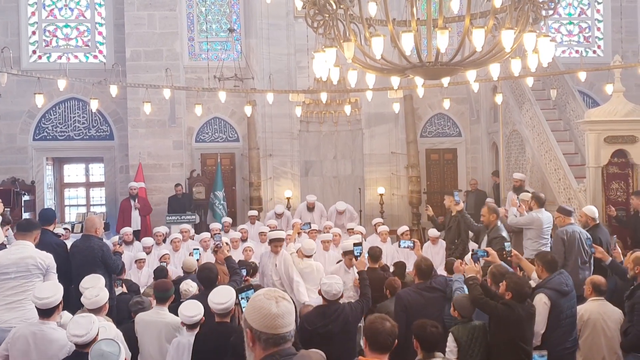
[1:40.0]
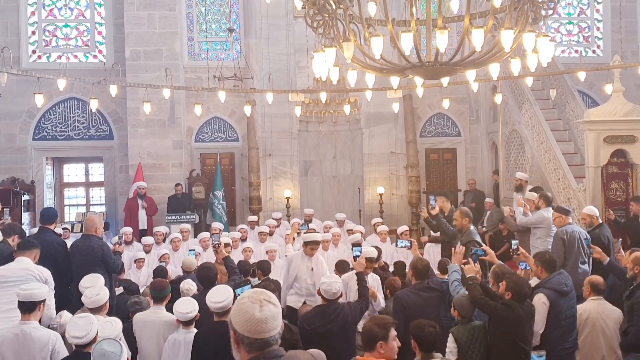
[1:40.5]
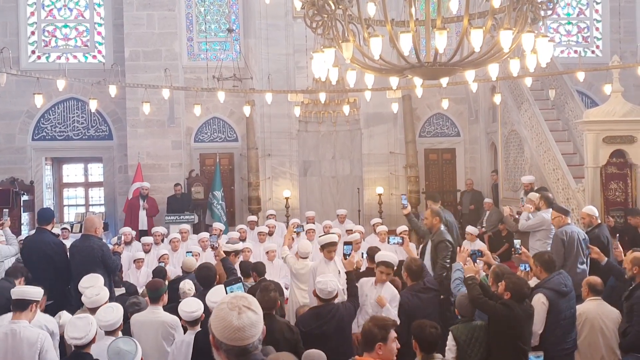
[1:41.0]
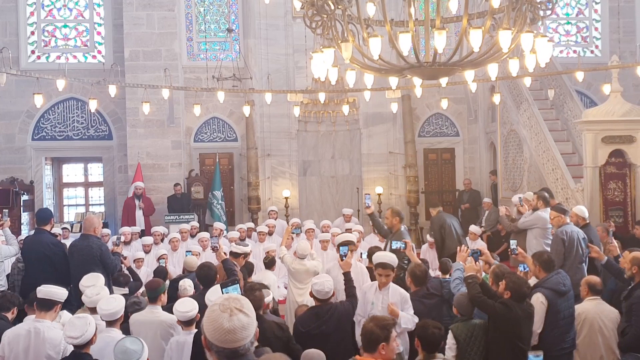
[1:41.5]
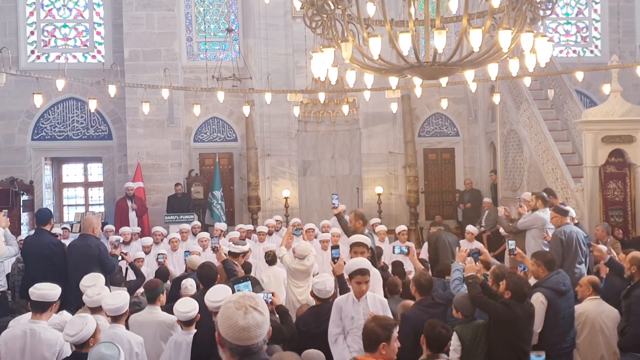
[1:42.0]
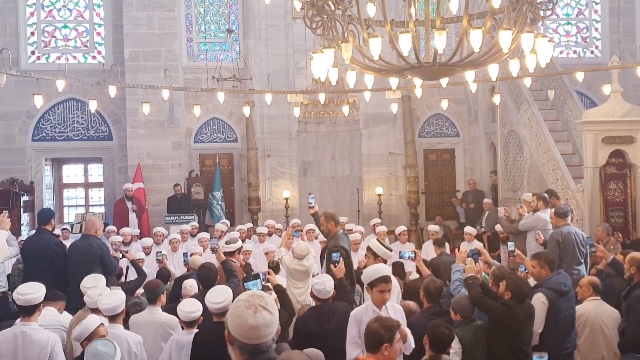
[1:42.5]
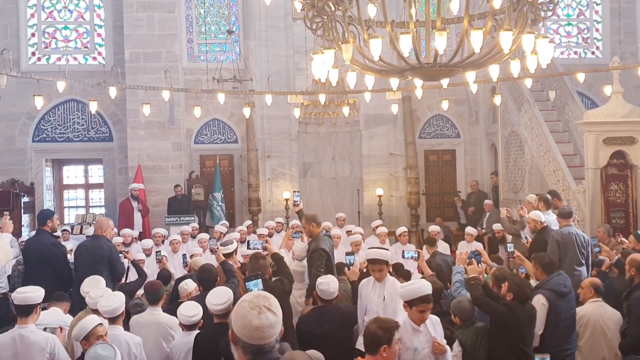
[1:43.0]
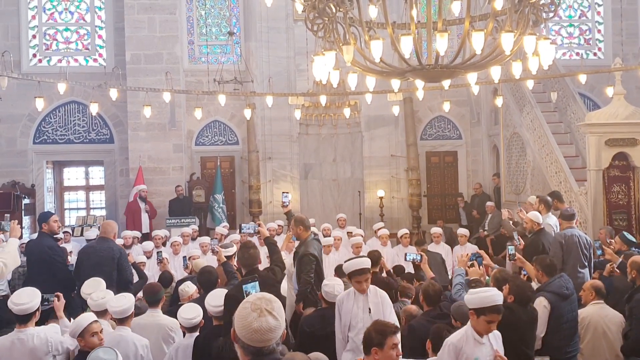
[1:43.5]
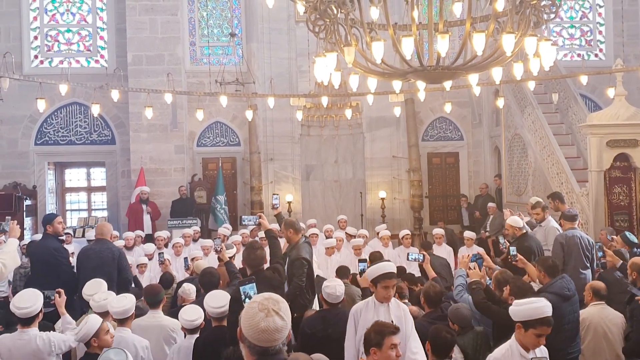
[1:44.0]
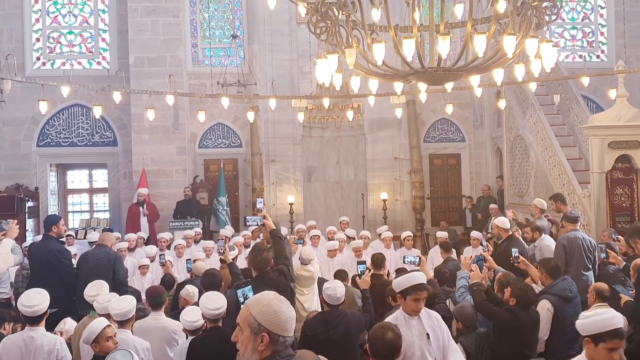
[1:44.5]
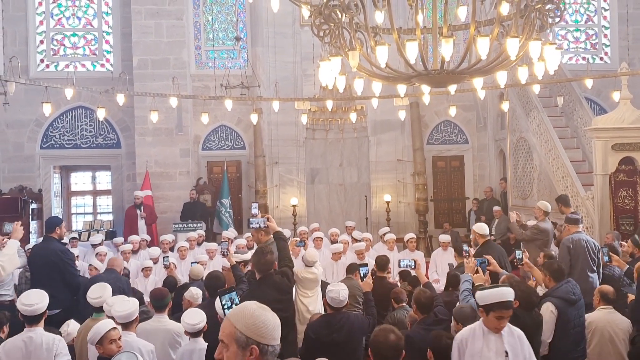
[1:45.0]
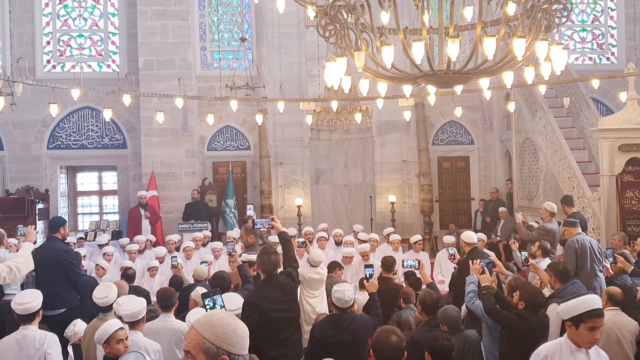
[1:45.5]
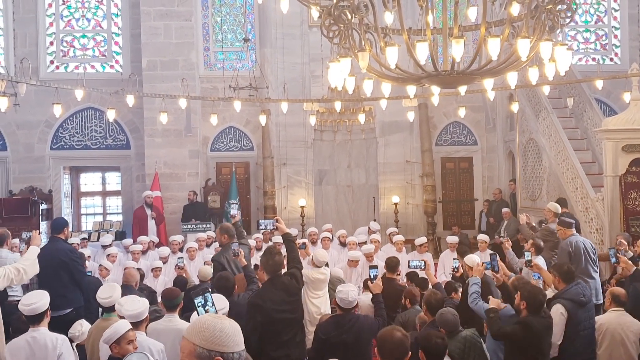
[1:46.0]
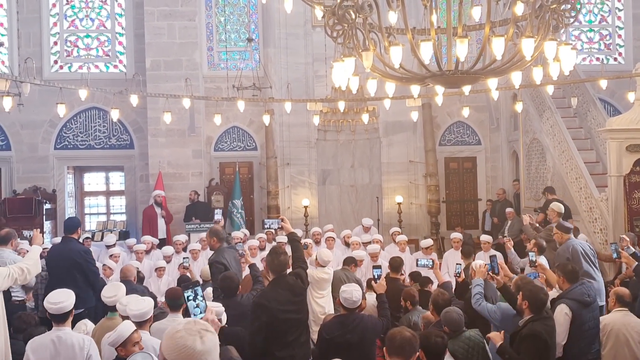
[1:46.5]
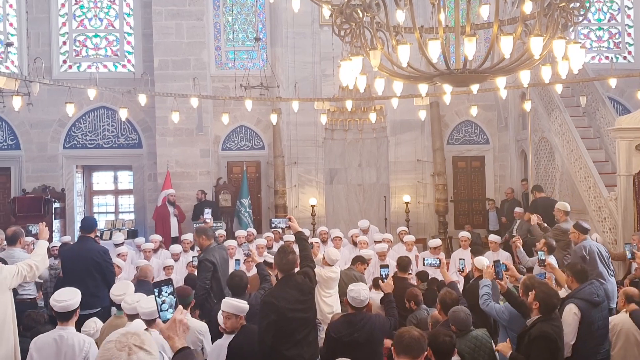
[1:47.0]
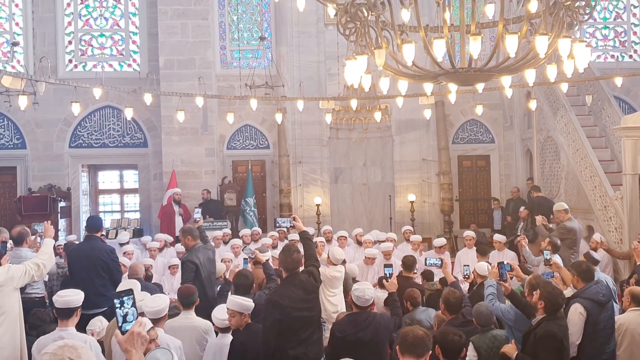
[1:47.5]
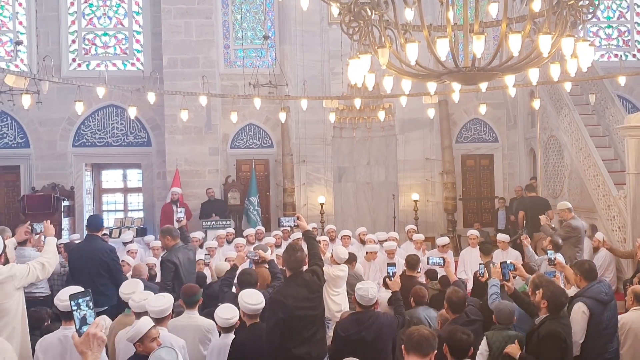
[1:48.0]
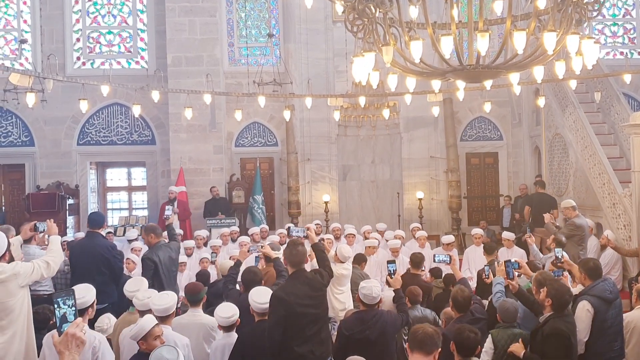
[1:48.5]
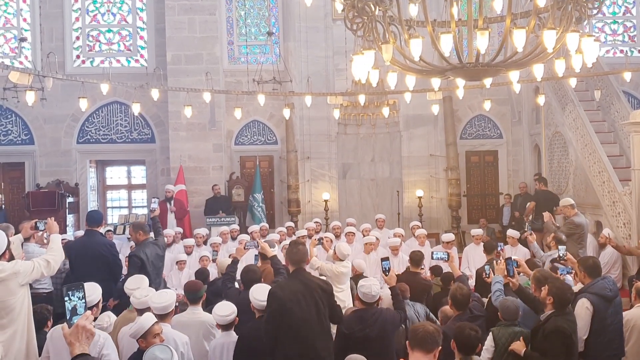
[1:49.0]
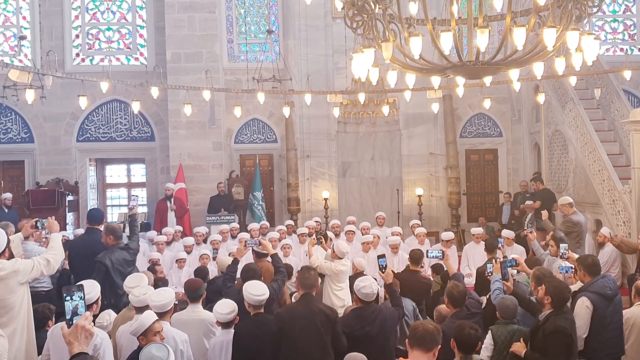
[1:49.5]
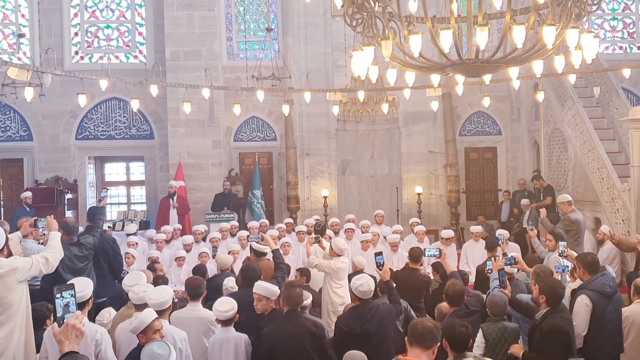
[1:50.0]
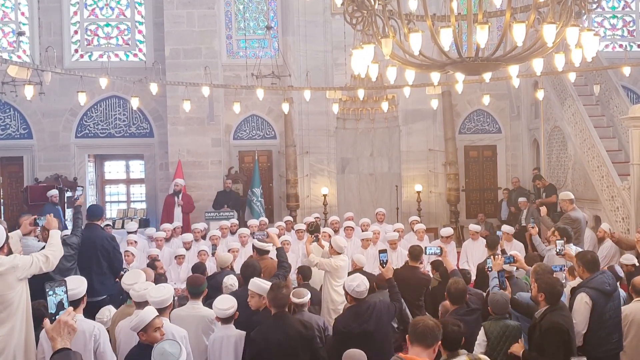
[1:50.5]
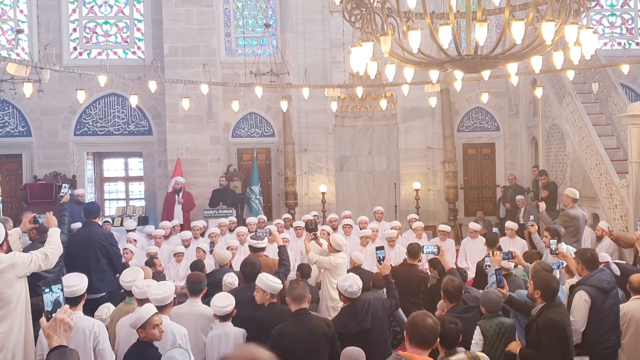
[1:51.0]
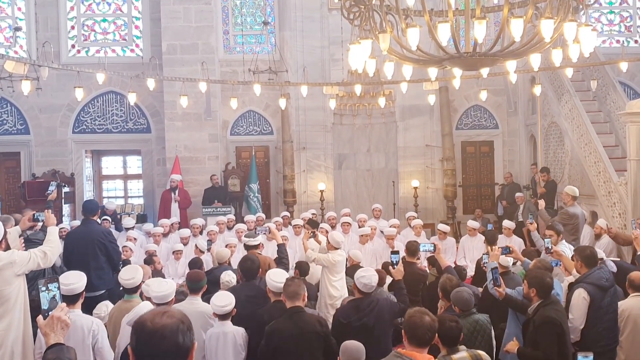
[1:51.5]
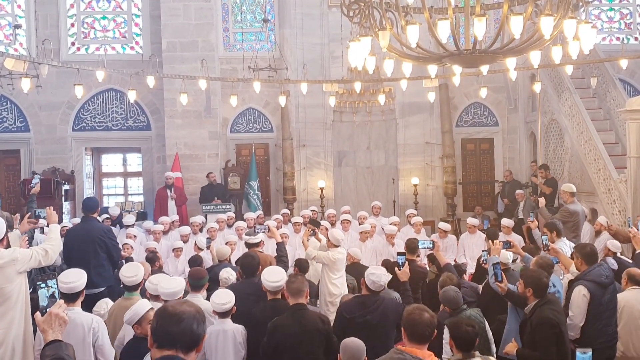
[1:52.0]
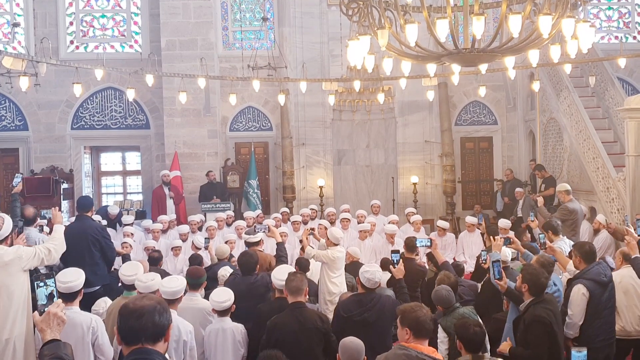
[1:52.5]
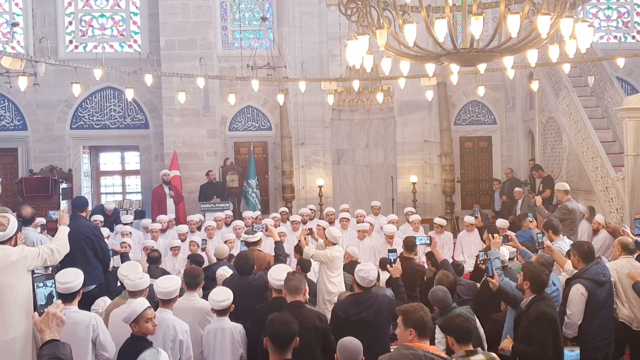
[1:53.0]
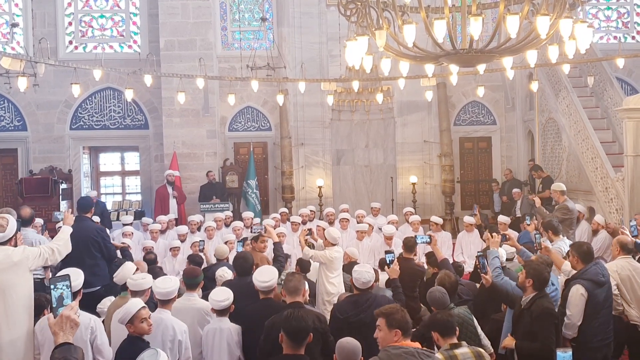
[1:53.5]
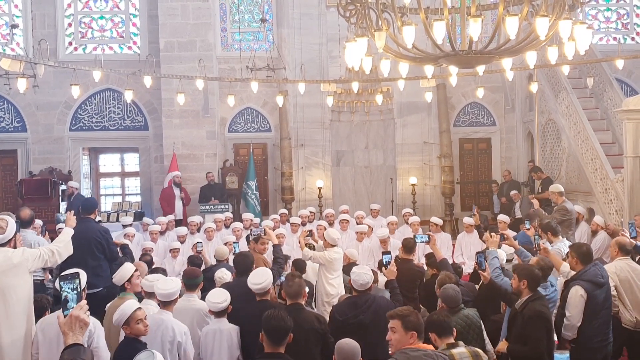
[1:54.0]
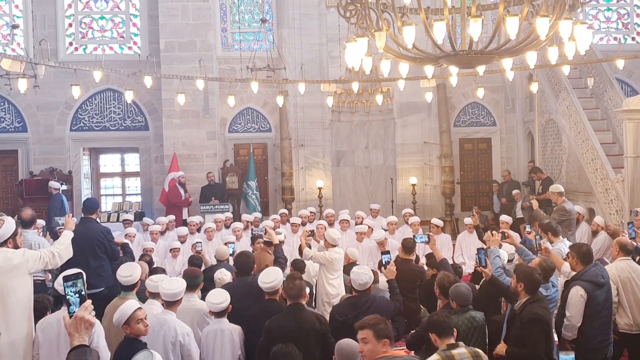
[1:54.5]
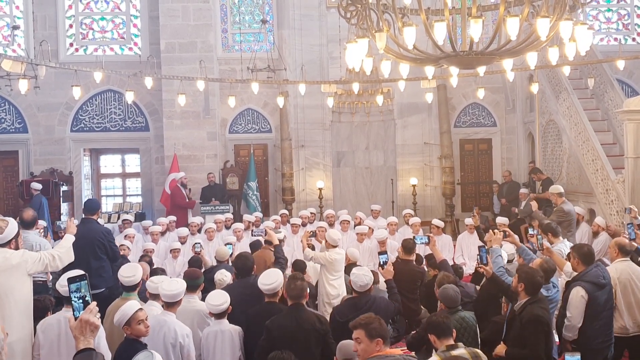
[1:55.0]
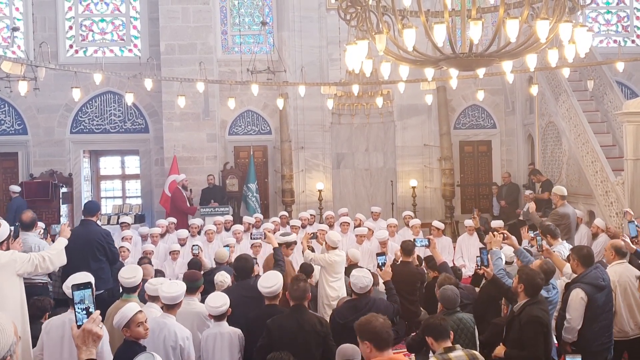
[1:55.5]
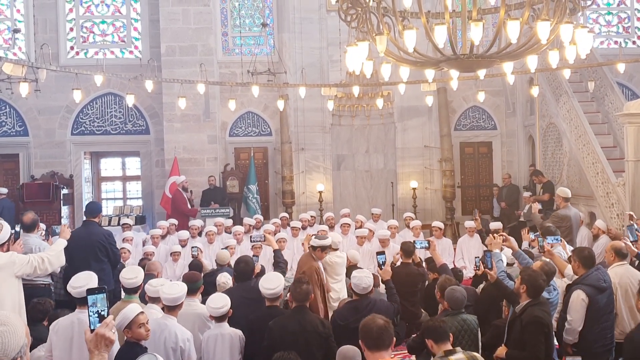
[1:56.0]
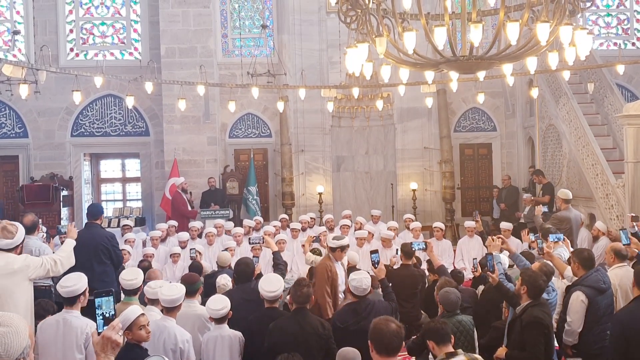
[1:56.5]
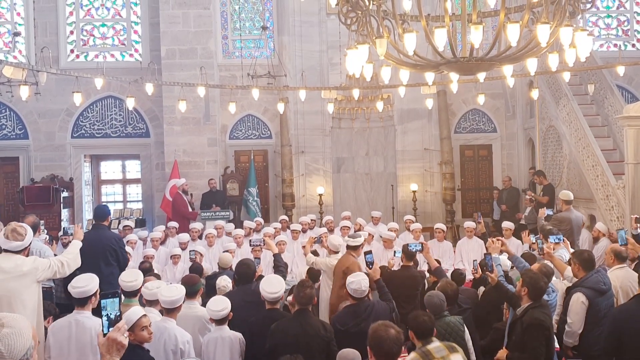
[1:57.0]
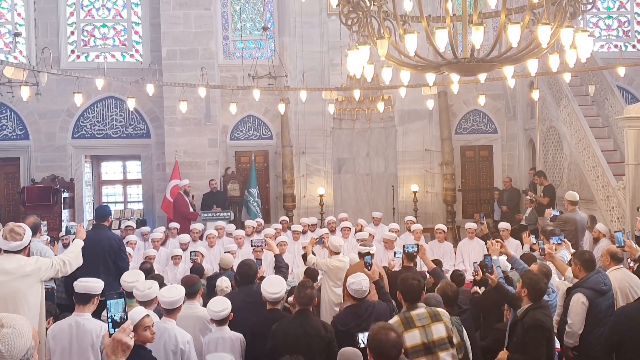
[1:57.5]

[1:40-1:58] A congregation watches a whole group of young boys and men who have walked into a church-like setting. The group of men now sits in chairs in the central area of the church, facing outward, kind of toward the congregation, all wearing white robes with white hats. Some of the congregation are still snapping pictures and videos; some move while holding their videoing device or phone up above to capture the whole group of young men and boys. Some of the congregation are now sitting down, but some are still standing as they video or snap pictures.